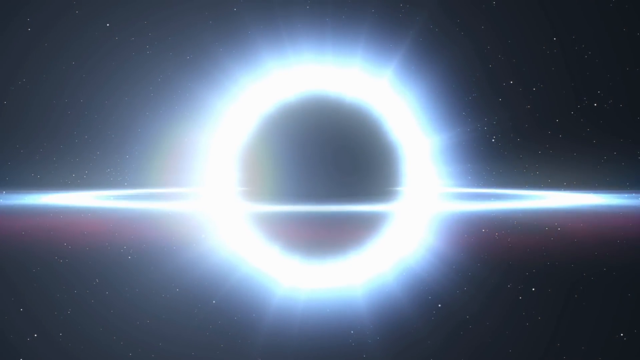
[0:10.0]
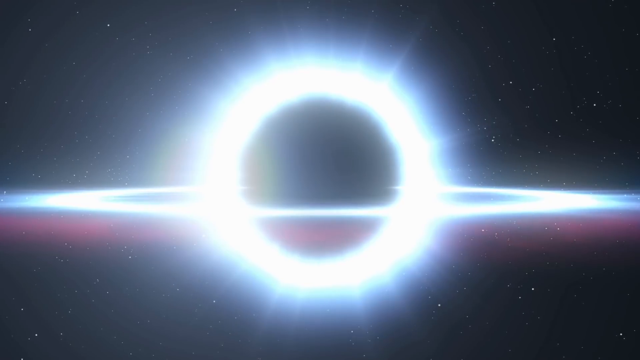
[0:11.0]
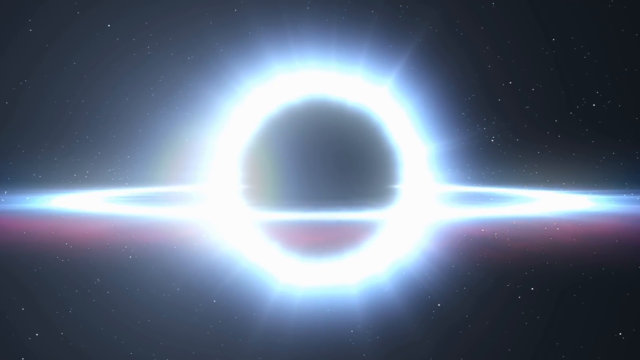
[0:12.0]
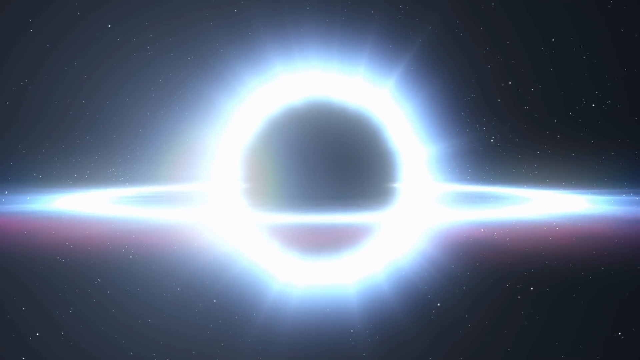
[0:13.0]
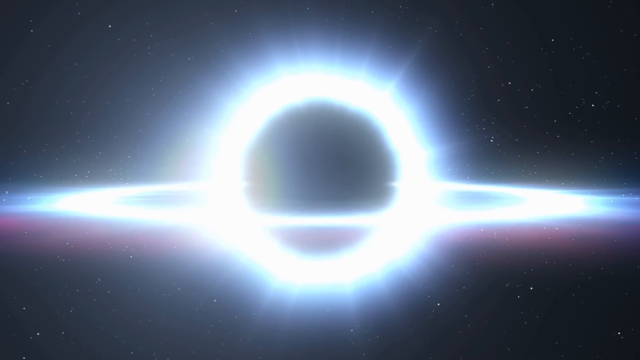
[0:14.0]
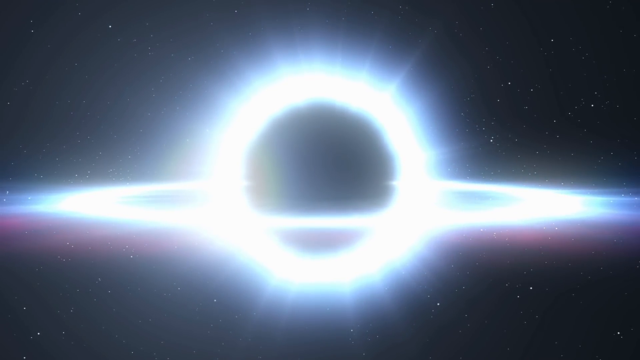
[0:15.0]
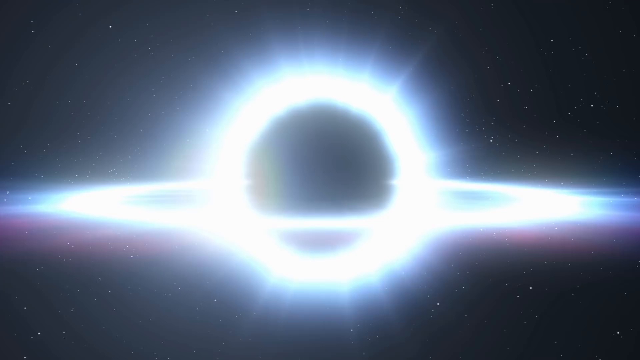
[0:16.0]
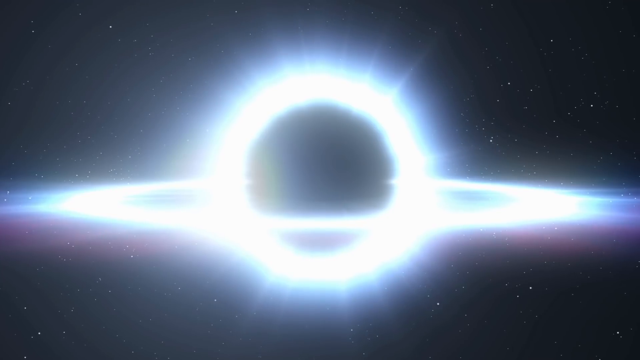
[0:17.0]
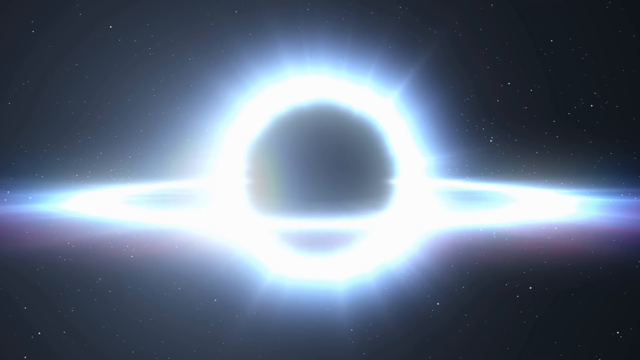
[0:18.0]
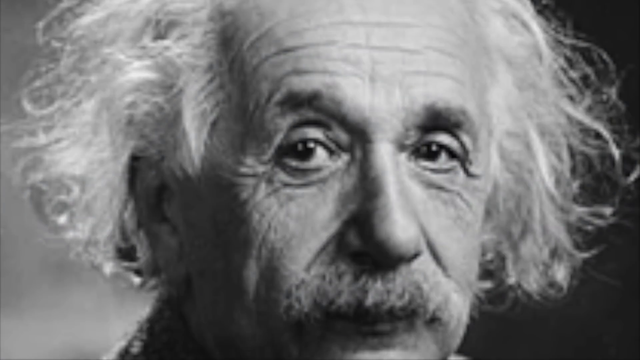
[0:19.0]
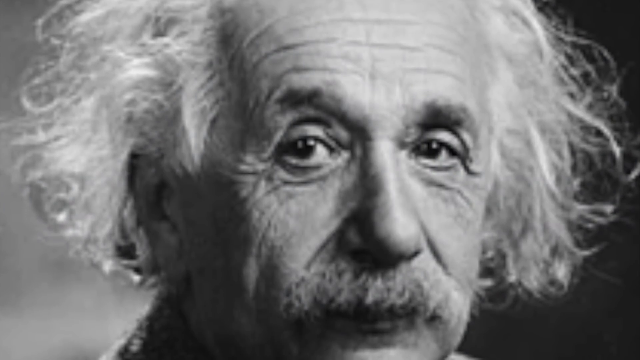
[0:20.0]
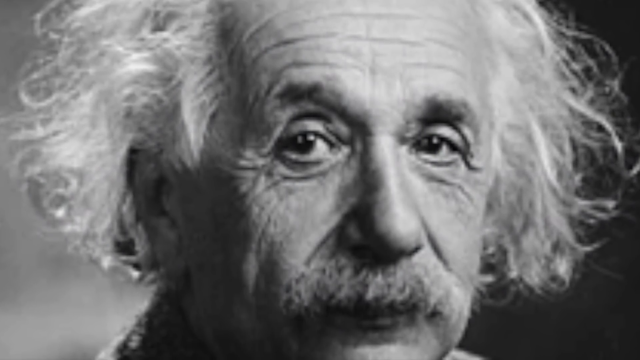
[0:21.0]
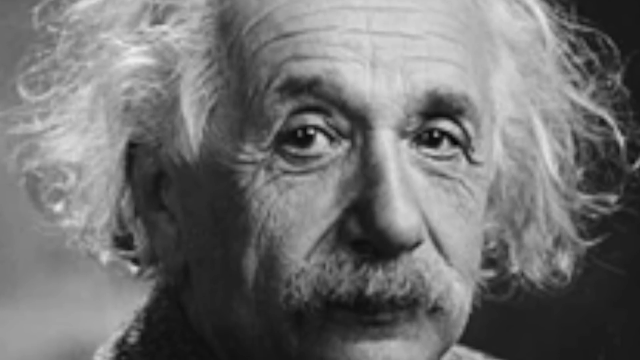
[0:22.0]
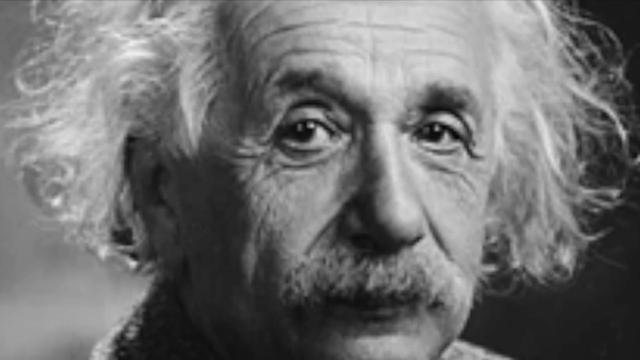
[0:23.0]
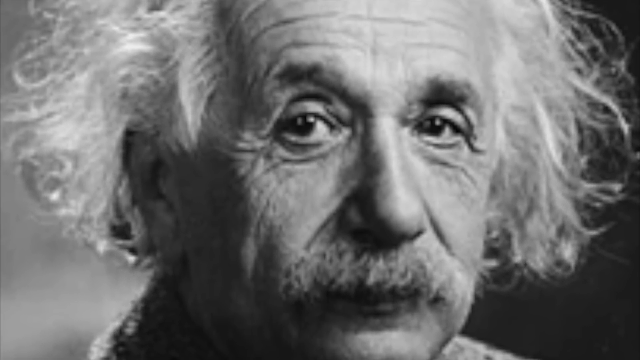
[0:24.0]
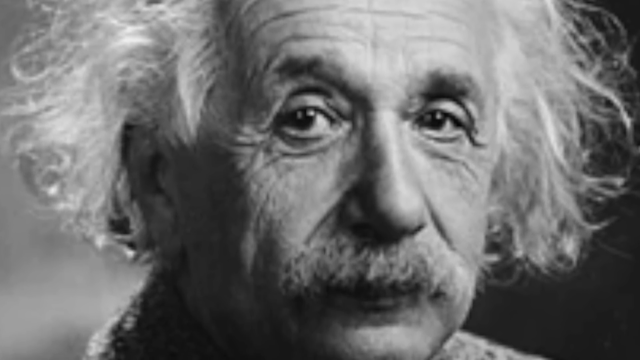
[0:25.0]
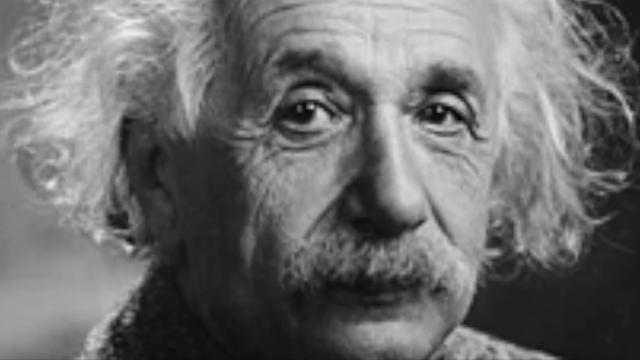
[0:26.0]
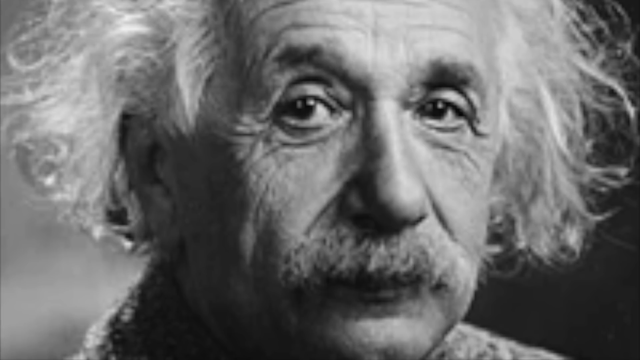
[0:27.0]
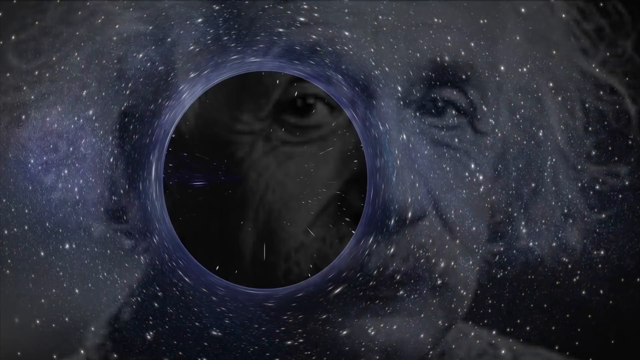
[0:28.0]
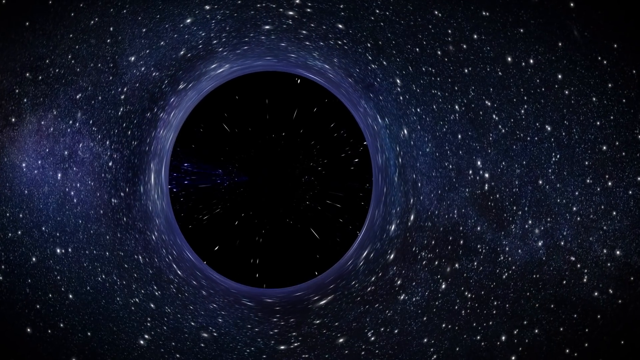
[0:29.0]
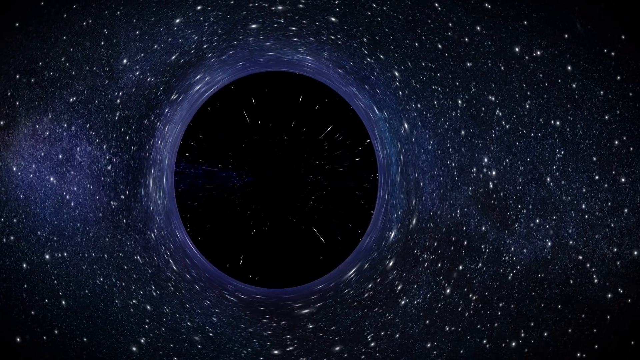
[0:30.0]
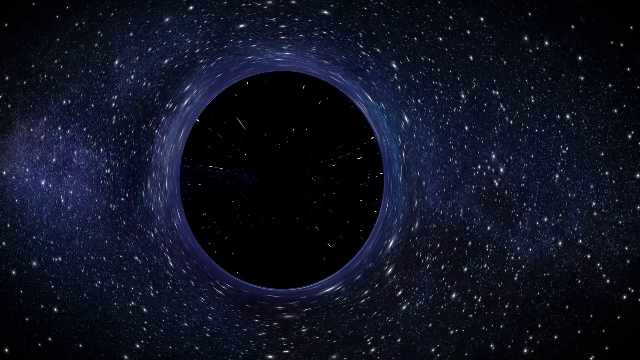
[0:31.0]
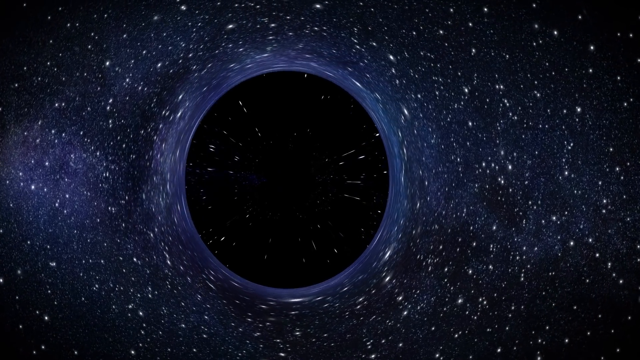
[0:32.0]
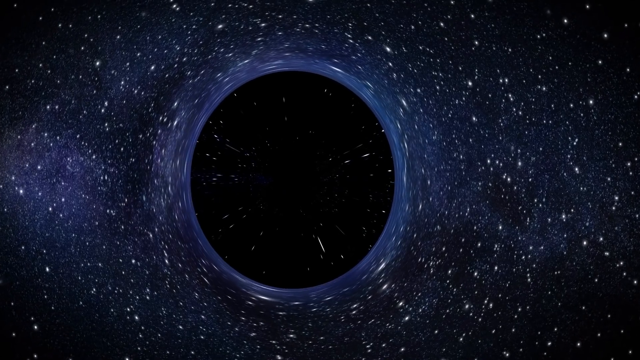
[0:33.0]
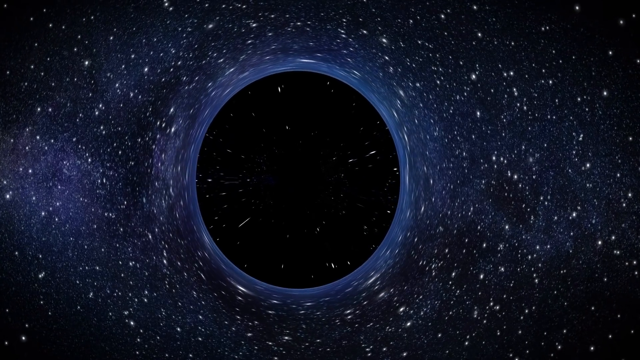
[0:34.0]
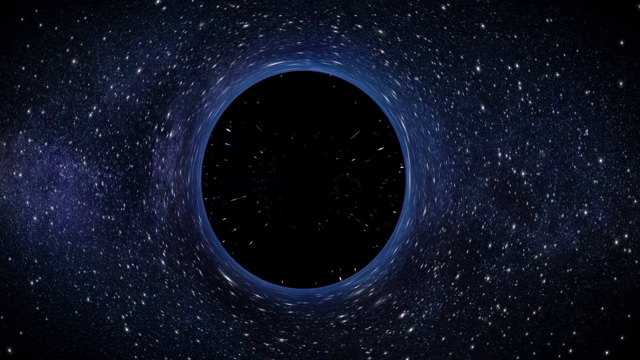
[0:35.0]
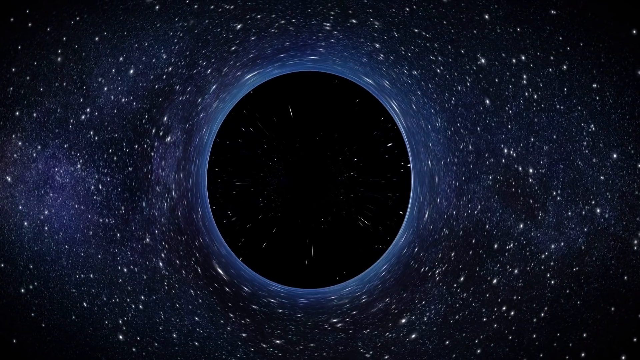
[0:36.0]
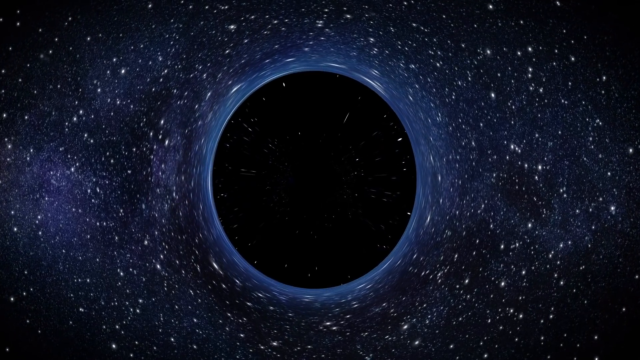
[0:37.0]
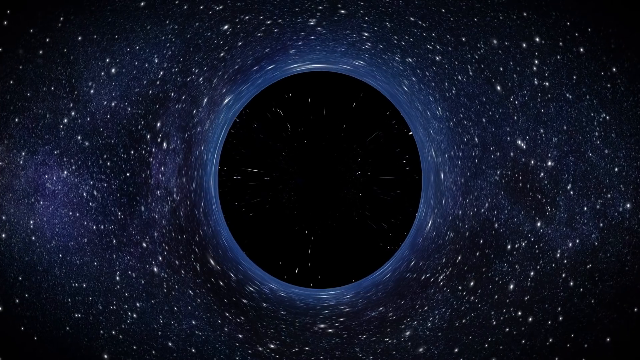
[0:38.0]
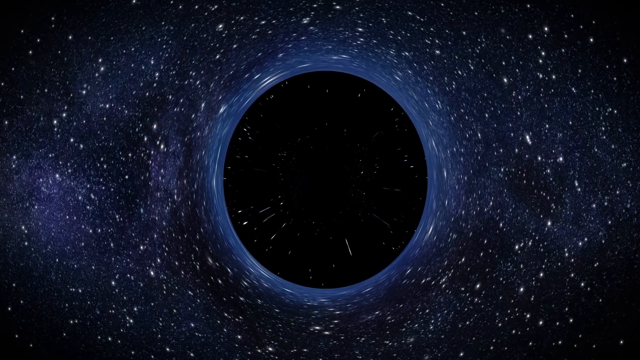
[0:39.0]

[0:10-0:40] What appears to be the galaxy or outer space is black with many little bright dots, apparently stars. A big circle grows larger, and then a ring goes around the circle like a planet. The image gets brighter and brighter until it is super bright and the lines seem to start meshing into each other. Then a black and white photo of Albert Einstein appears, facing the camera; the photo looks really light, and his hair appears gray or possibly white, and he has a bushy mustache. Next there appears to be a hole, possibly a black hole in space, with the stars going all around it in a perfect circle. Looking into it, it looks like a tunnel, with lines going down around the outside of the hole.